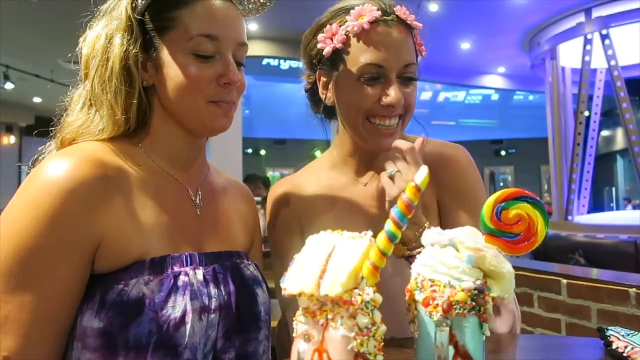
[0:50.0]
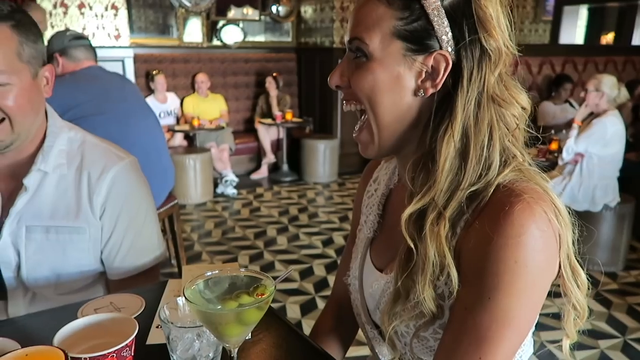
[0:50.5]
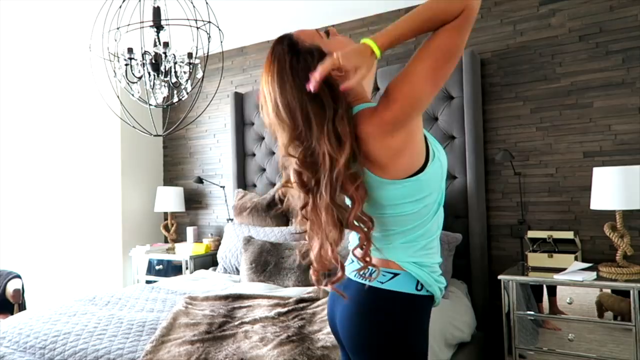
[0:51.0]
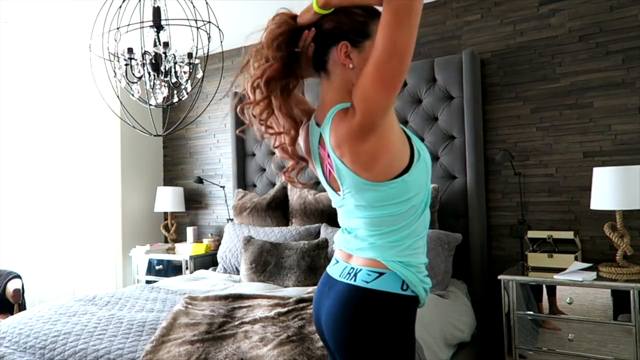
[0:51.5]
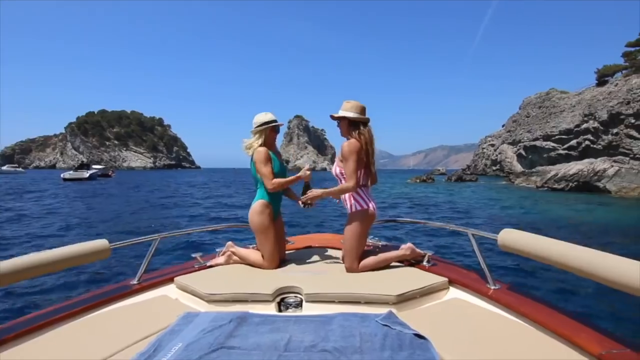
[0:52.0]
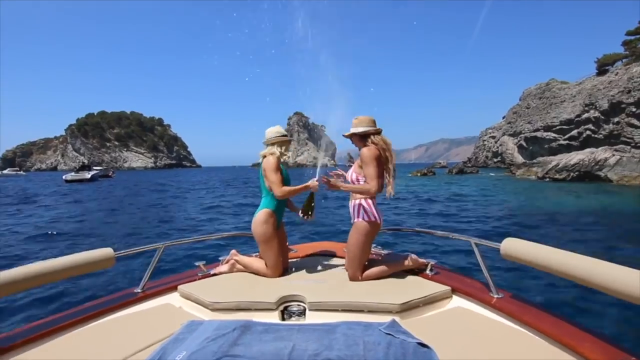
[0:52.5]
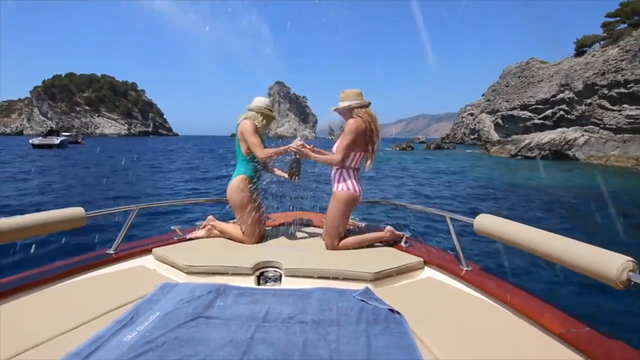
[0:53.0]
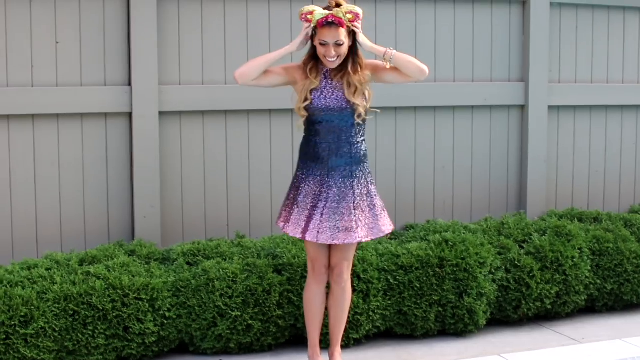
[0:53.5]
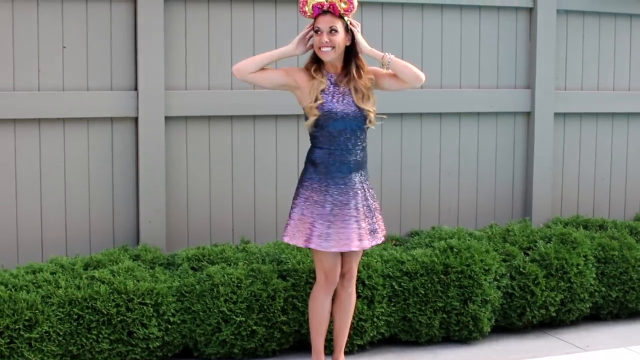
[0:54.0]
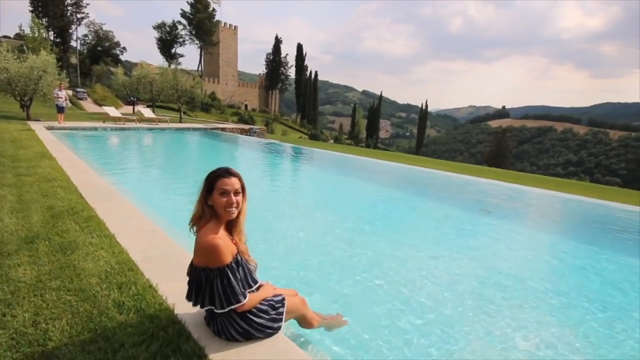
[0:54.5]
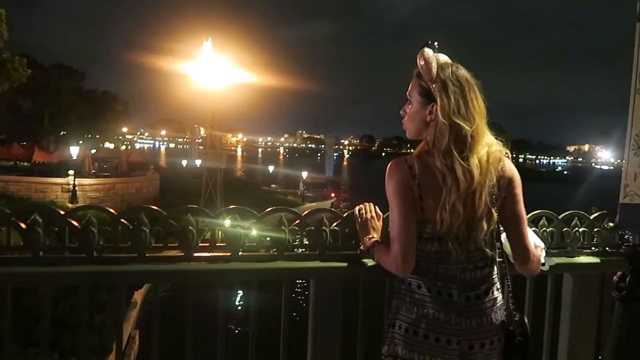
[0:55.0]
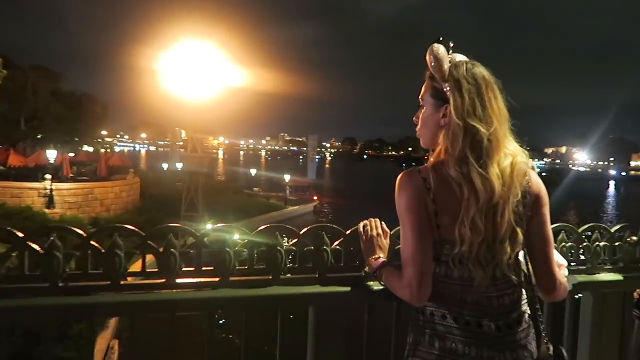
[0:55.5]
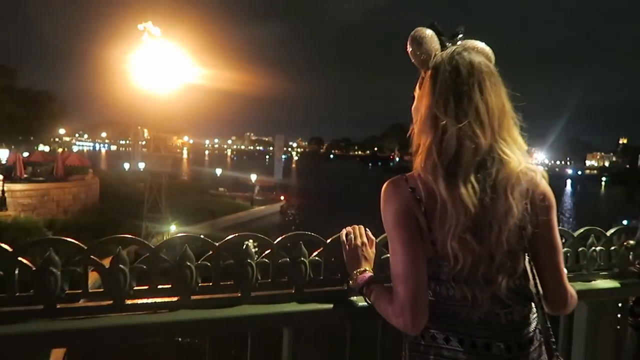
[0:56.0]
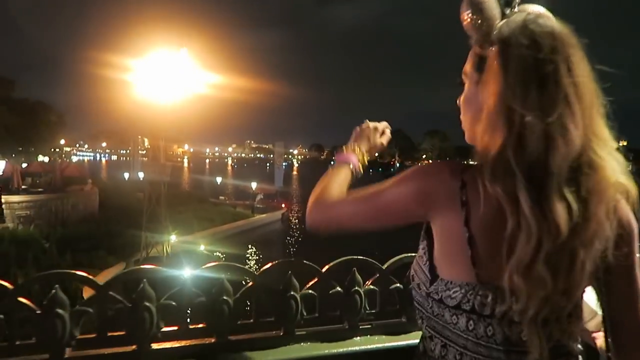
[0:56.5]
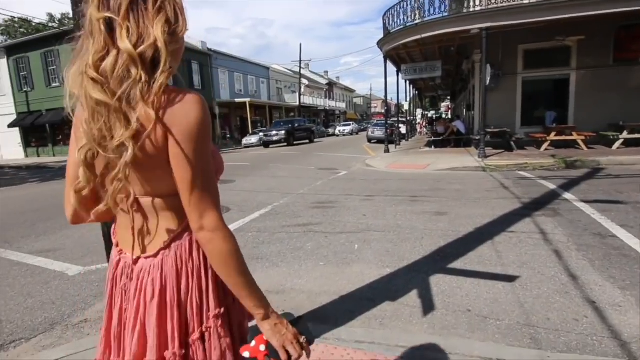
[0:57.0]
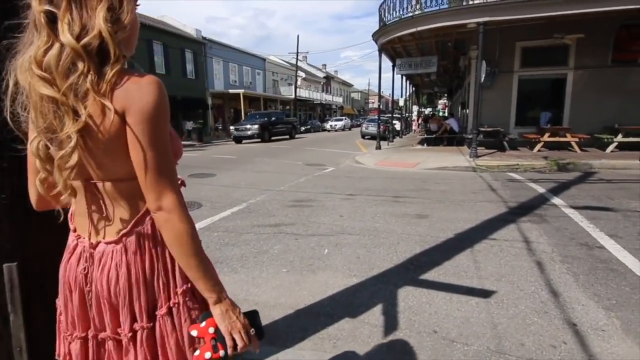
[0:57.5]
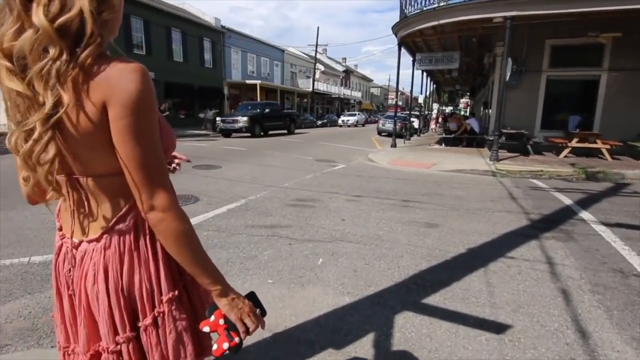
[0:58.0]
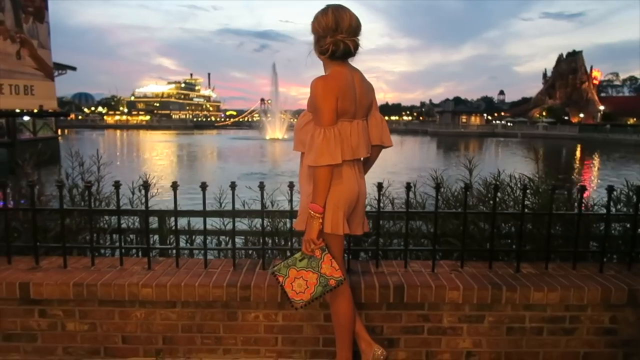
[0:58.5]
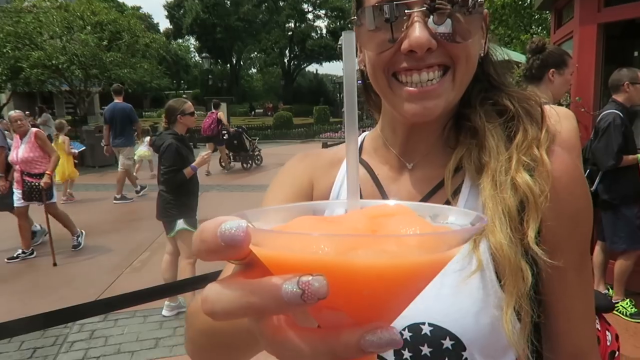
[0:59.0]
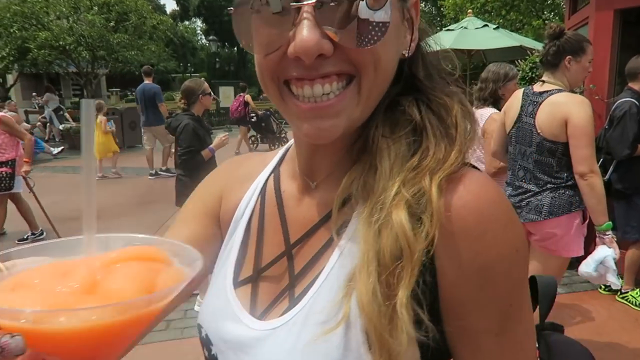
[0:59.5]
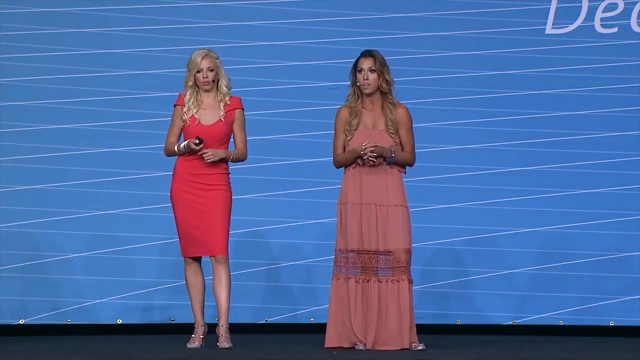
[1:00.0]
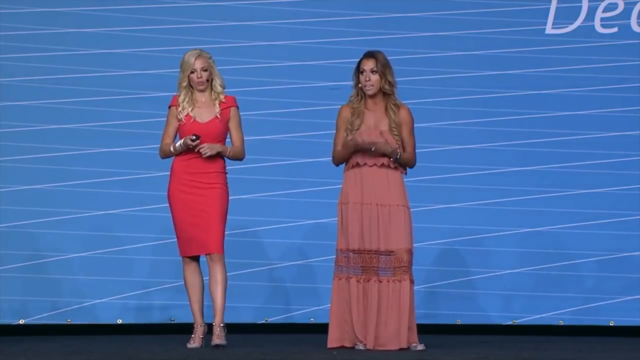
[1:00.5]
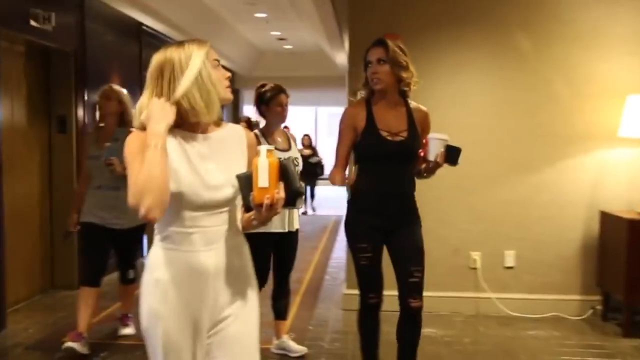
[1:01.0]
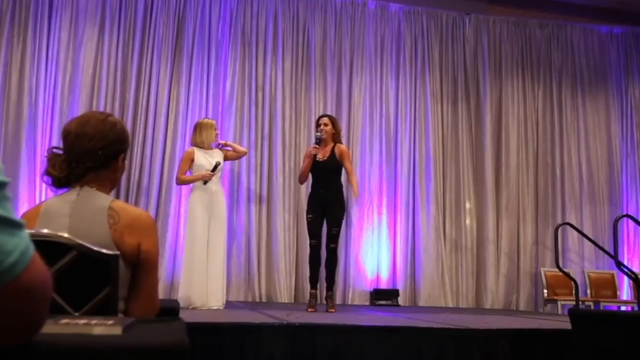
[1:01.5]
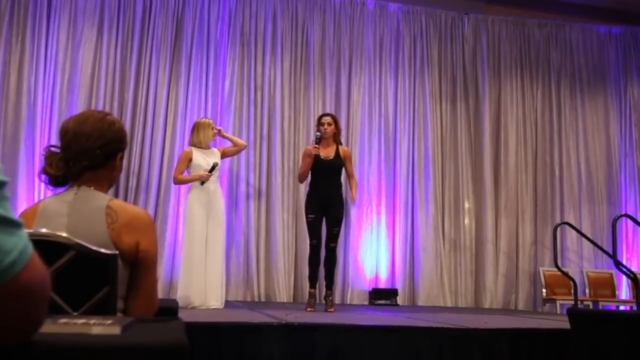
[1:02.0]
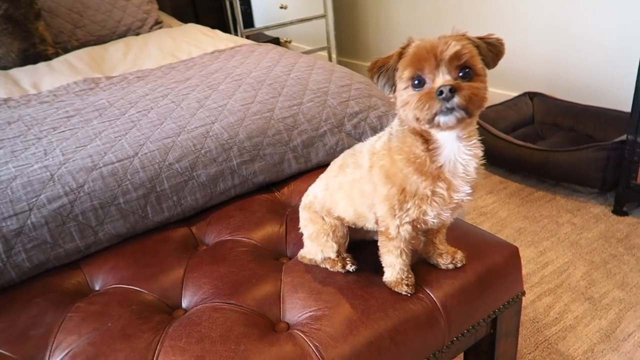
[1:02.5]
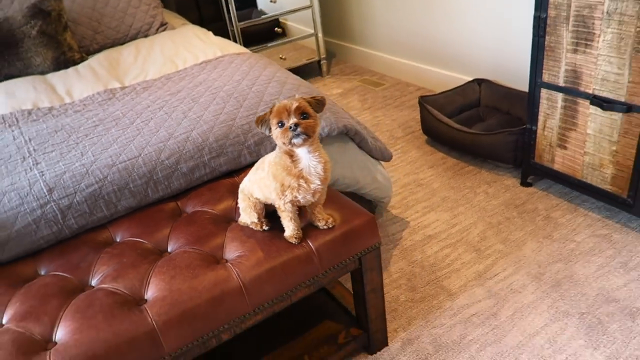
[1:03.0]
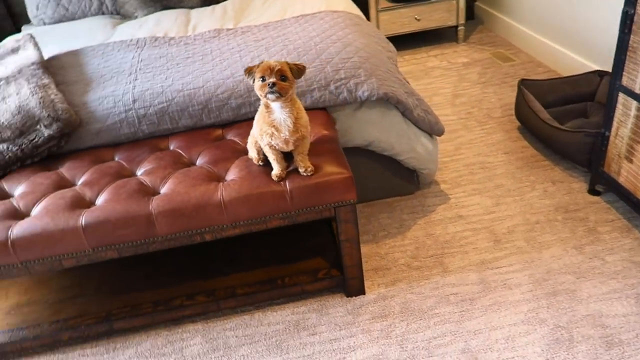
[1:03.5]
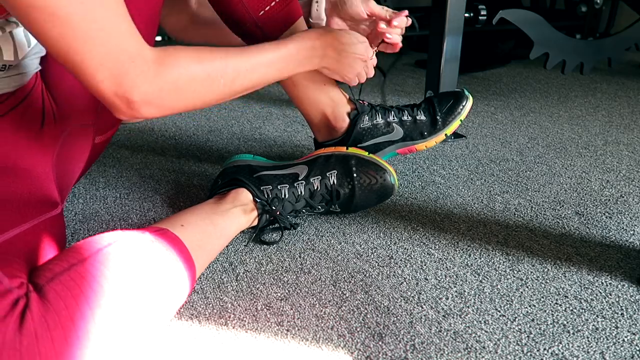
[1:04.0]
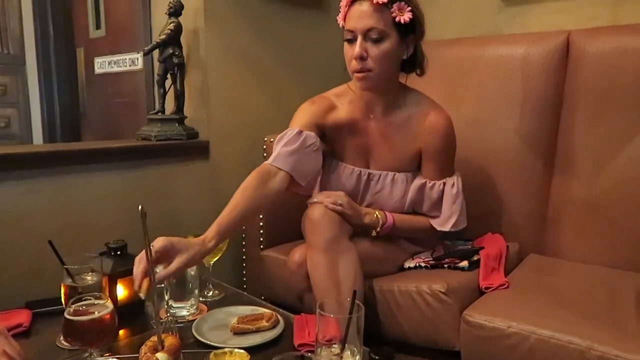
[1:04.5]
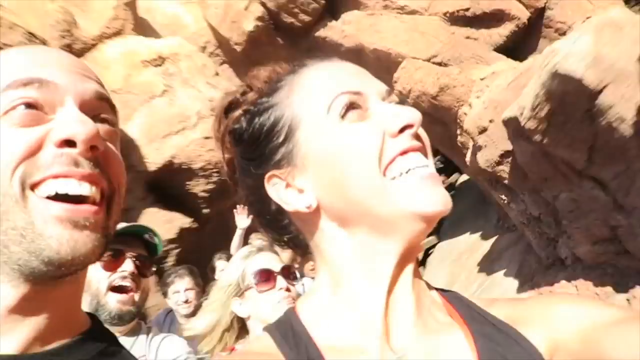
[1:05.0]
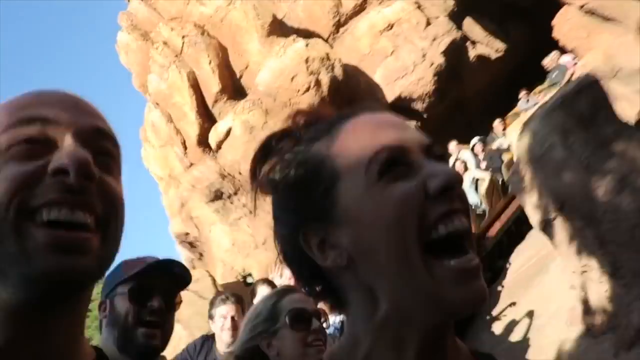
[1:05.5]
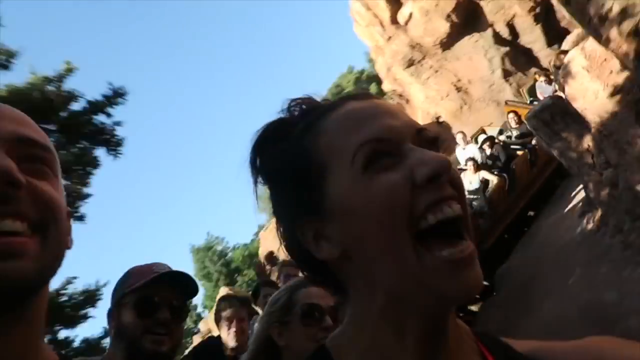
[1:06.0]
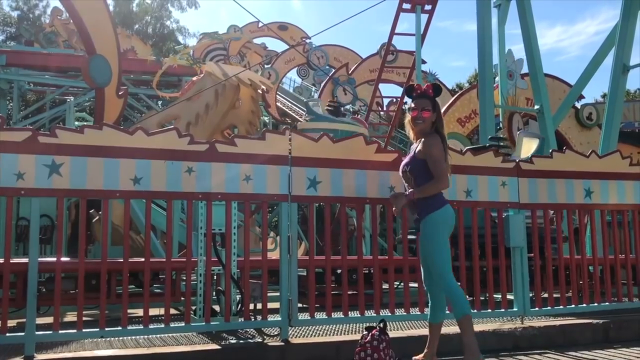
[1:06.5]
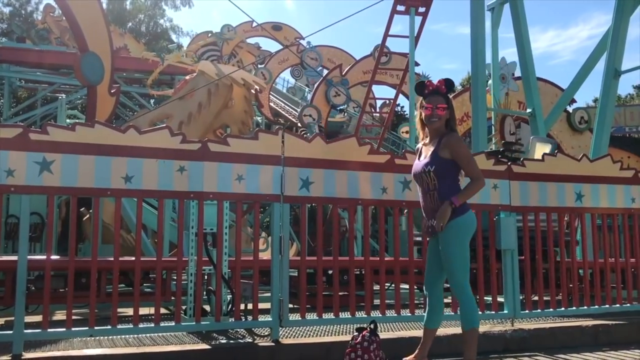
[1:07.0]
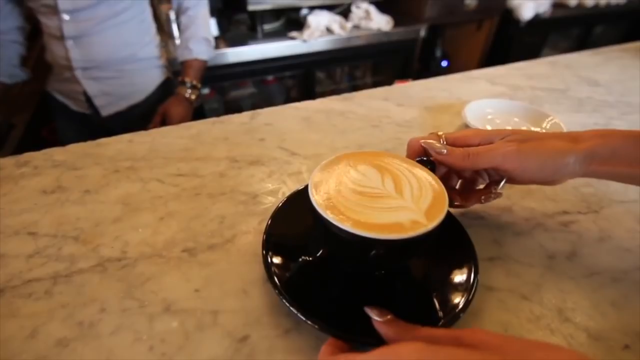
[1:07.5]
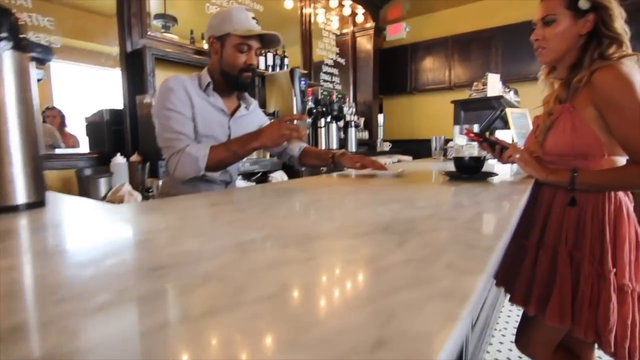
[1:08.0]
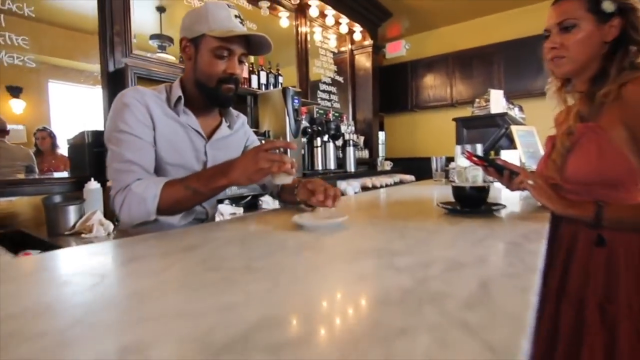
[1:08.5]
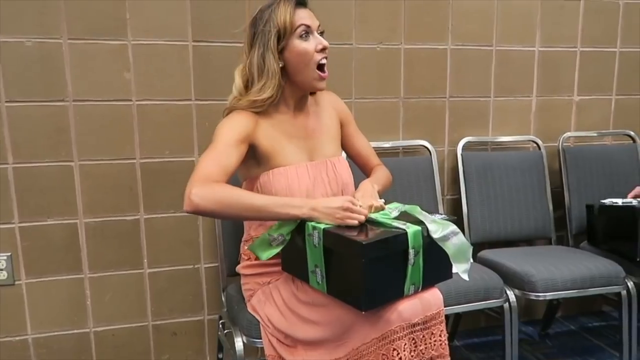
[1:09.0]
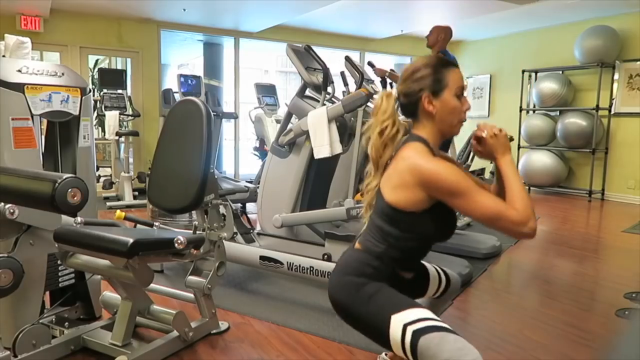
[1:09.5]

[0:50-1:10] Two women each hold a colourfully decorated drink. Both wear outfits that reveal the upper parts of their shoulders, and one of them grins and dances slightly. Possibly one of the women is then shown laughing in a restaurant while sitting with other people. A woman in a bedroom folds her long hair, with a lot of light flowing into the room from the left side of the screen. Two women on a ship open what could be champagne, and the liquid sprays upwards, with water and a hilly mountain in the background under a blue sky. Probably one of the women laughs and moves her body playfully beside some green plants in front of a grey wooden fence. Probably the same woman sits at the edge of a pool with her legs in the water, with a lot of greenery in the background under a cloudy sky. The woman is then at a balcony at night, with a wide glow of light shining in her face and many other lights glowing in the night. She stretches her left hand as the video transitions to possibly her walking on the road. Maybe the woman holds a small purse as she takes in the view of the city from maybe another balcony. The woman holds a drink in a funnel-like cup with a straw in it; she grins, her blonde hair flowing down her left shoulder, with other people in the background. Briefly, possibly the woman stands with another woman on a stage making a presentation. What is possibly the backstage area follows, with the woman walking beside some other women. The woman is then on a different stage with another woman. A little dog sits at the edge of a bed. A fast montage of other shots of the woman follows; in many of them she smiles and laughs while out and about with other people. The last shot shows her exercising in a gym.